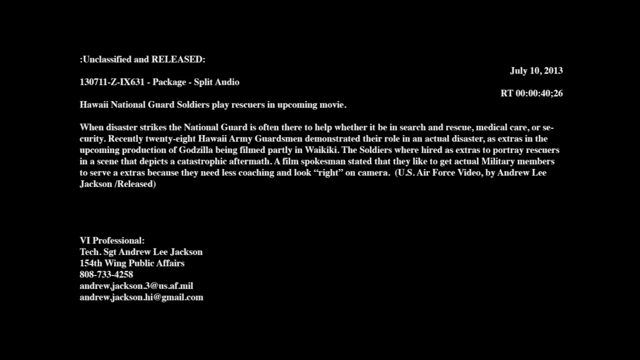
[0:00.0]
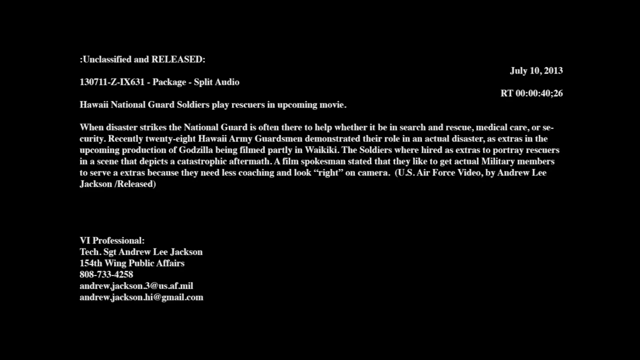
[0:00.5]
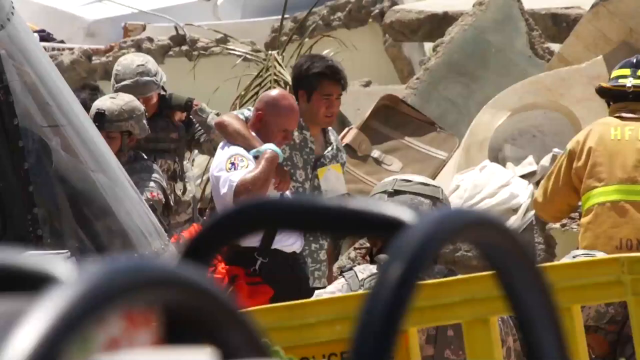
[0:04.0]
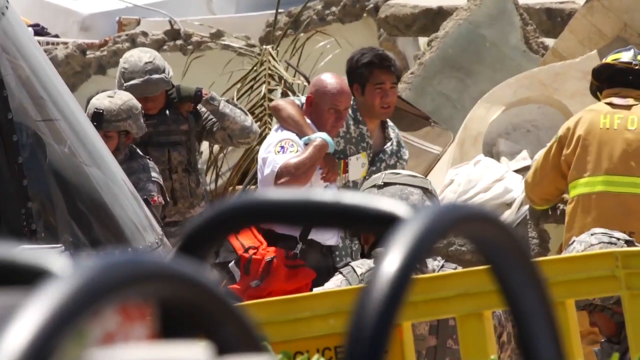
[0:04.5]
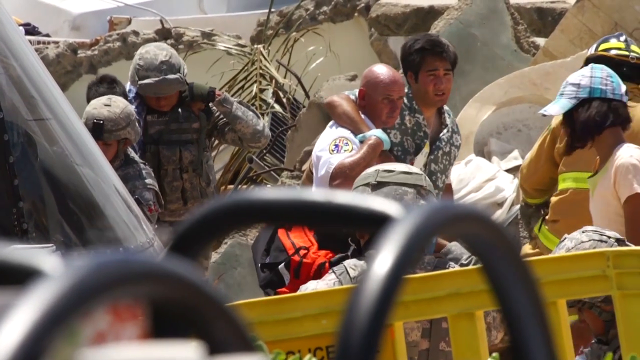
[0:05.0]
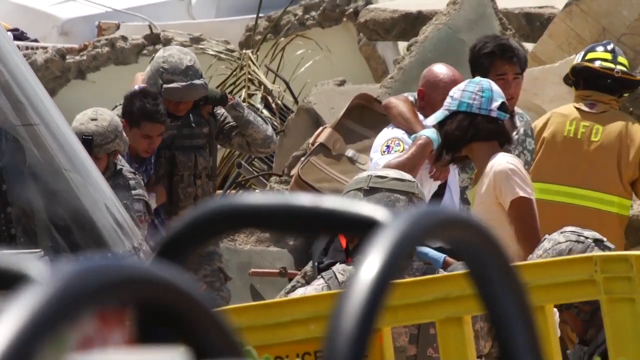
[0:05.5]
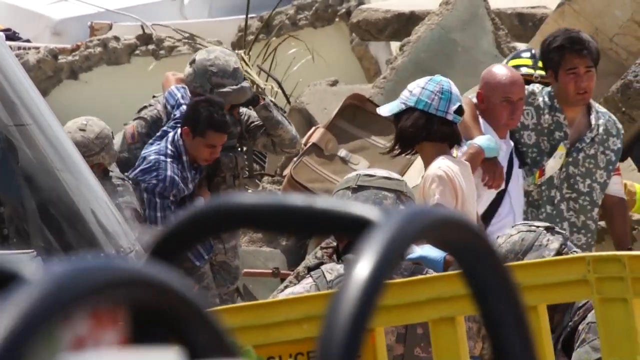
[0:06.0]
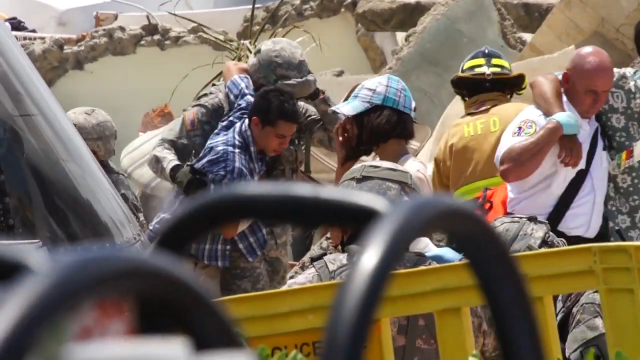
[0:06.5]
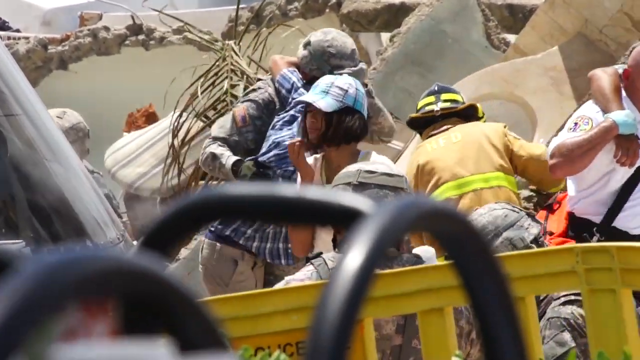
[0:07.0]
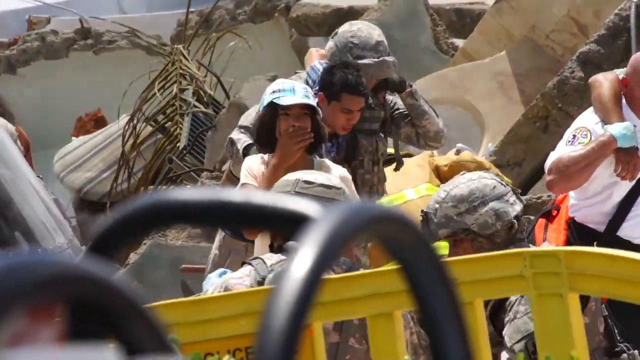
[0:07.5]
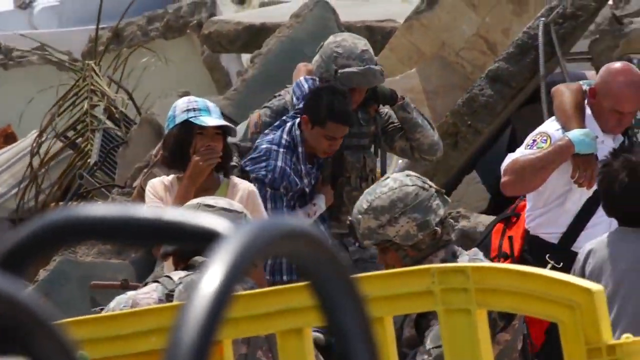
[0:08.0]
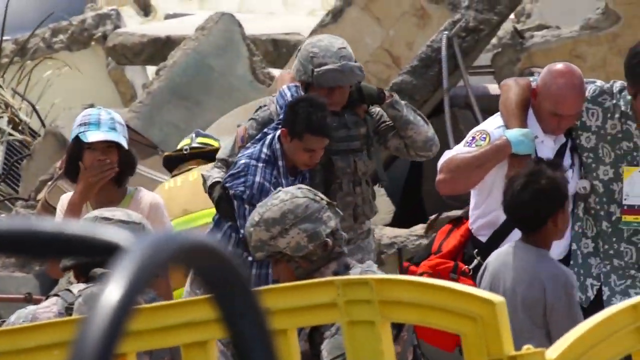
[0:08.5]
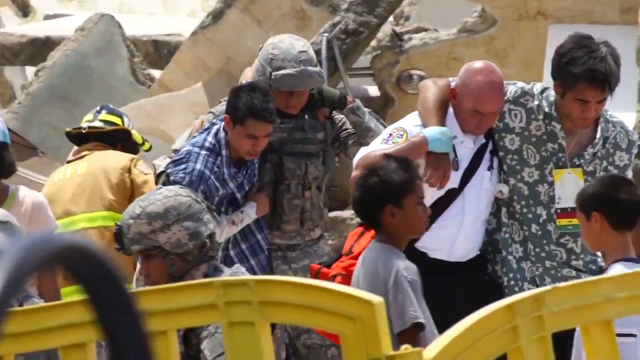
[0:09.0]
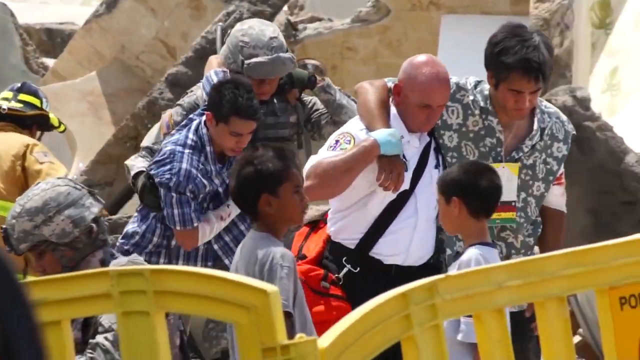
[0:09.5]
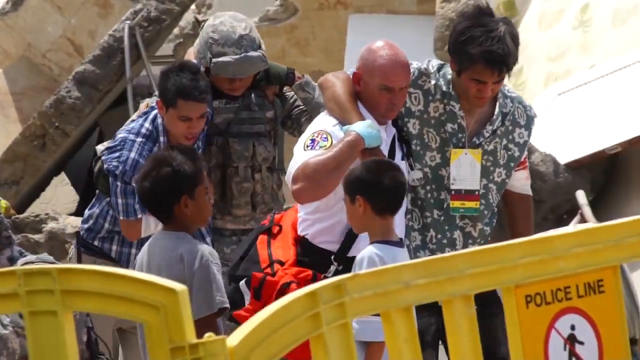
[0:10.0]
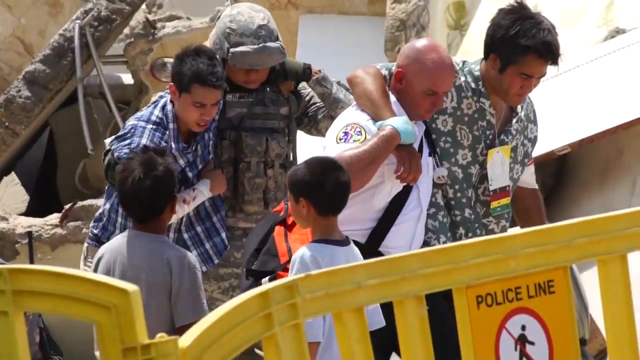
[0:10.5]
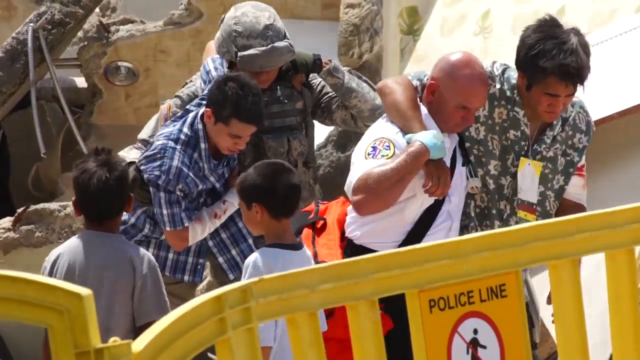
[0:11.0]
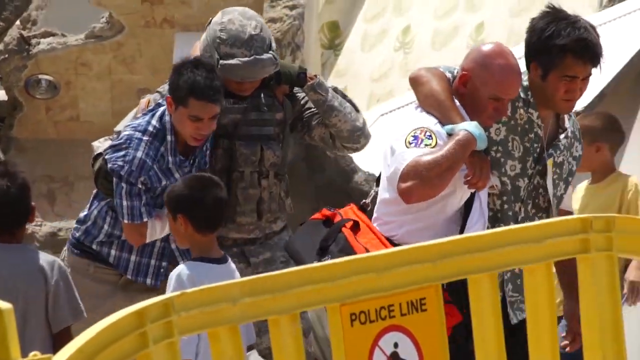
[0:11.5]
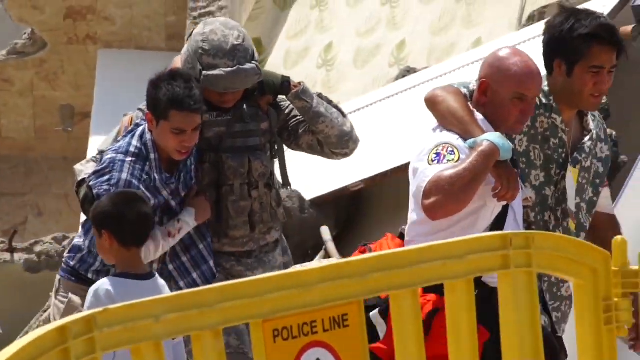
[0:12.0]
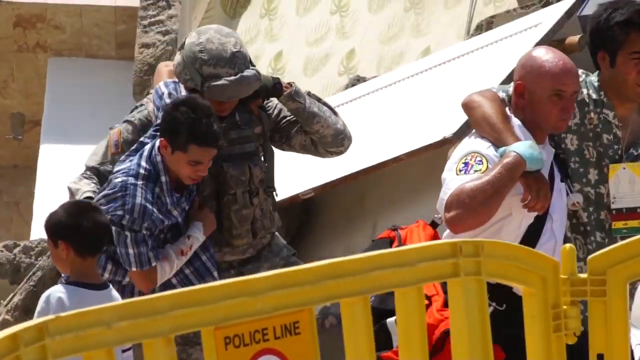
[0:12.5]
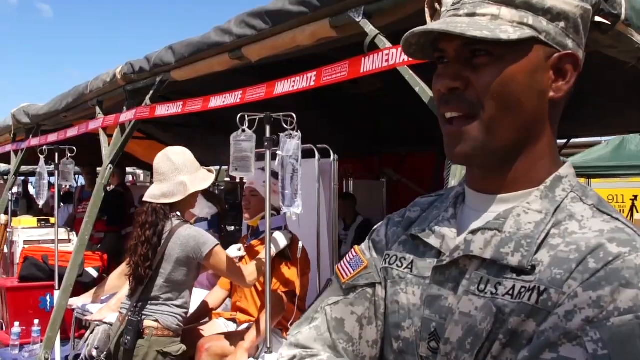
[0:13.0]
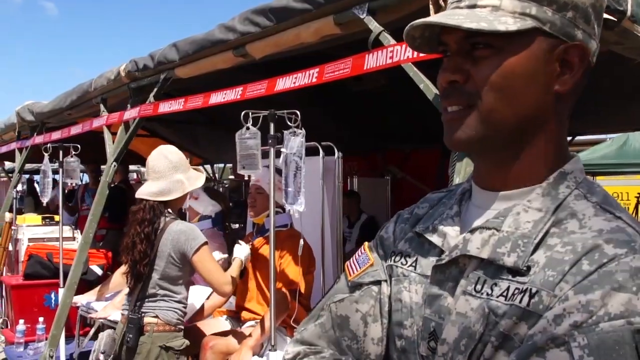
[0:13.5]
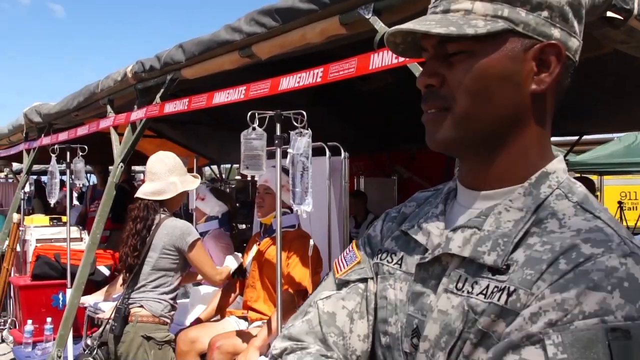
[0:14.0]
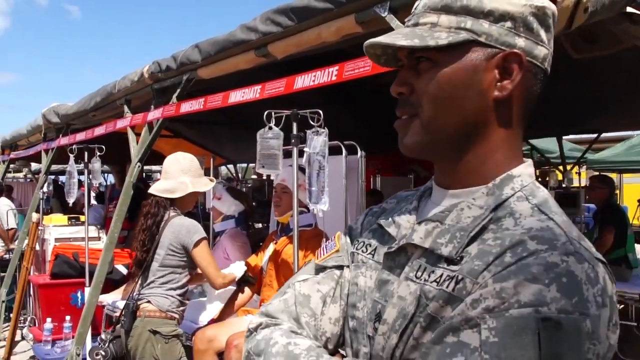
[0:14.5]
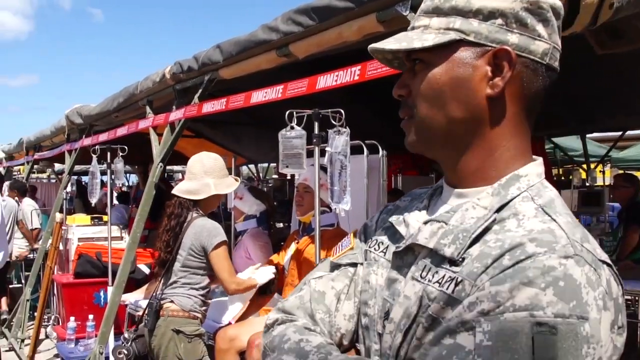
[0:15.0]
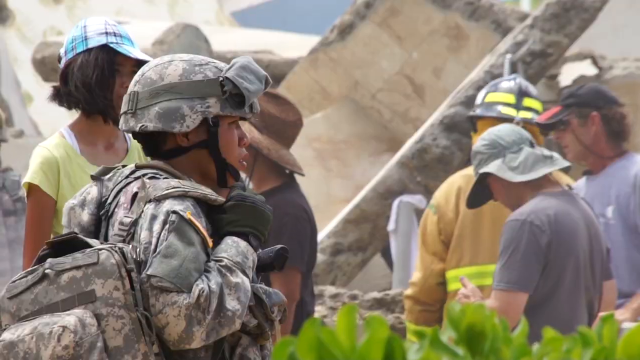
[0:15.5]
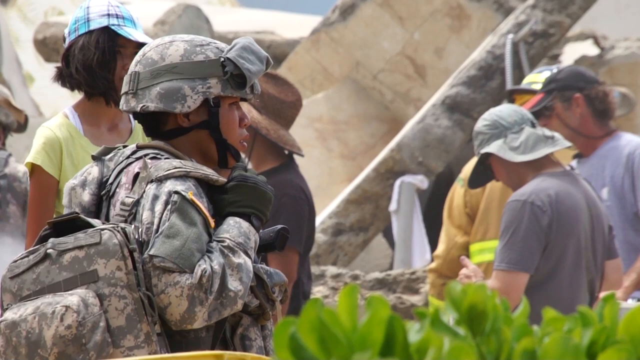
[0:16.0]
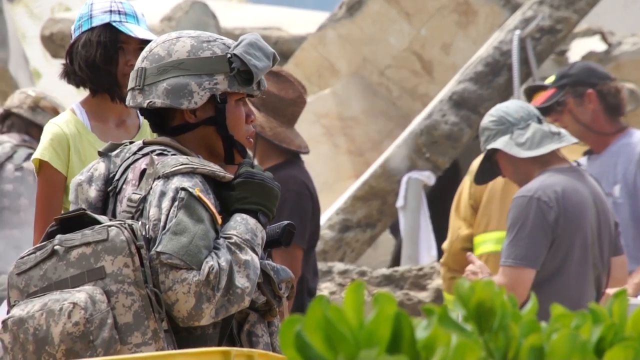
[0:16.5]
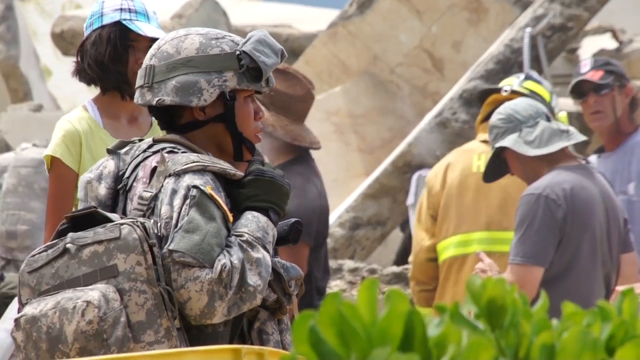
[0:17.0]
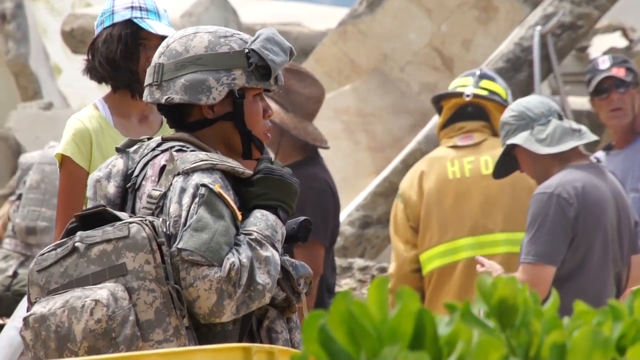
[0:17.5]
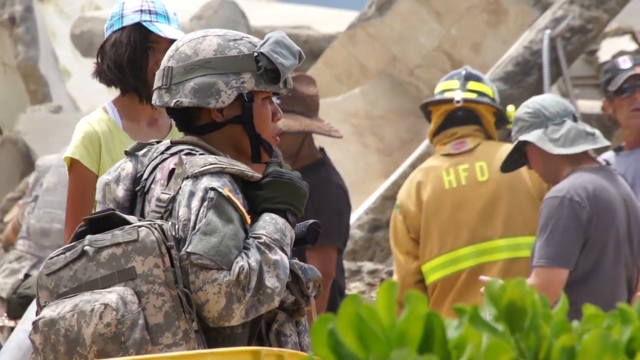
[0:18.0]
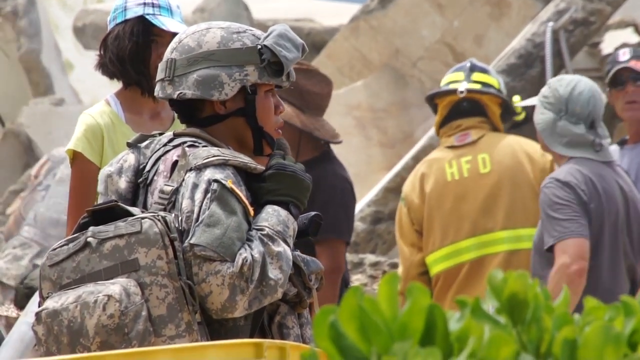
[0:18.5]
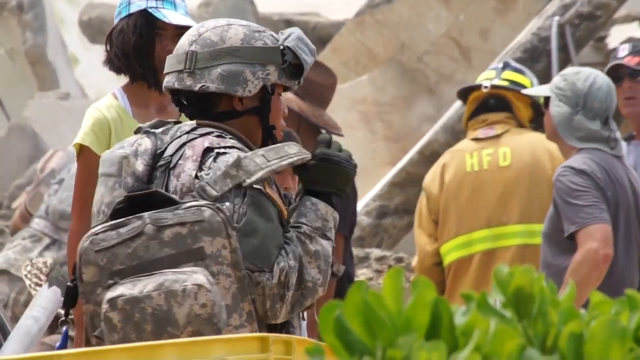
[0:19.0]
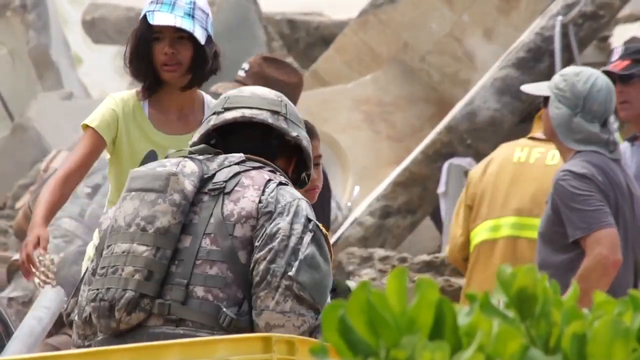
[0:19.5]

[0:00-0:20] The video opens with what appears to be an email. Its text reads "unclassified and released" and "130711-z-ix631-package-split-audio," followed by the headline "Hawaii National Guard soldiers play rescuers in an upcoming movie." On the right-hand side it says "July 10th, 2013" and "RT-00004026." The body text says: "When disaster strikes, the National Guard is often there to help, whether it be in search and rescue, medical care, or security. Recently 28 Hawaii Army Guardsmen demonstrated their role in an actual disaster as extras in the upcoming production of Godzilla, being filmed partly in Waikiki. The soldiers were hired as extras to portray rescuers in a scene that depicts a catastrophe aftermath. A film spokesman stated that they like to get actual military members to serve as extras because they need less coaching and look right, quote-unquote, on camera." It continues with "U.S. Air Force video by Andrew Lee Jackson/released" and also says "VI professional, Tech Sergeant Andrew Lee Jackson, 154th Wing, Public Affairs," along with his phone number and email address.